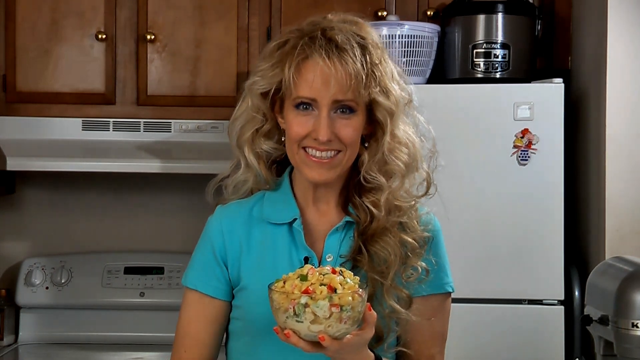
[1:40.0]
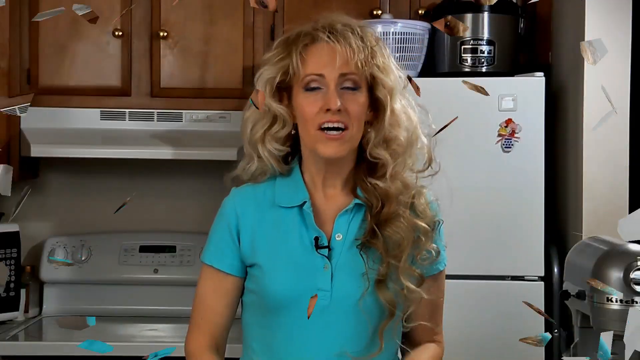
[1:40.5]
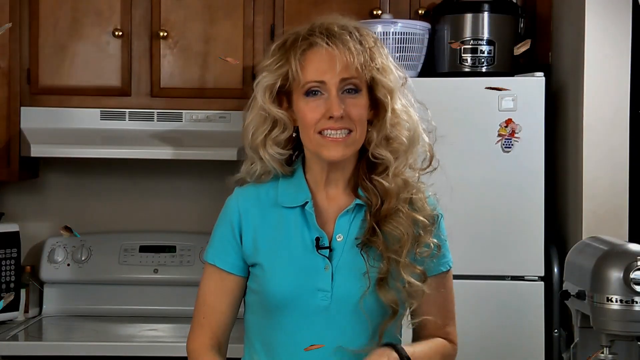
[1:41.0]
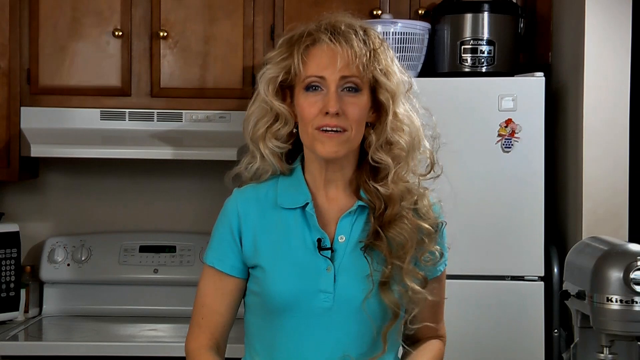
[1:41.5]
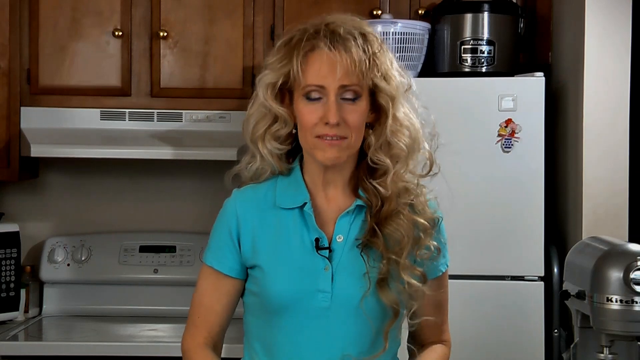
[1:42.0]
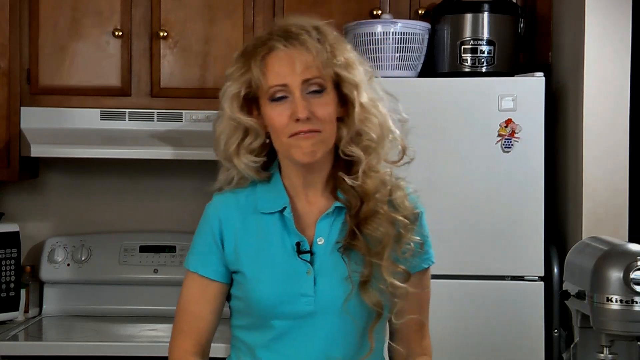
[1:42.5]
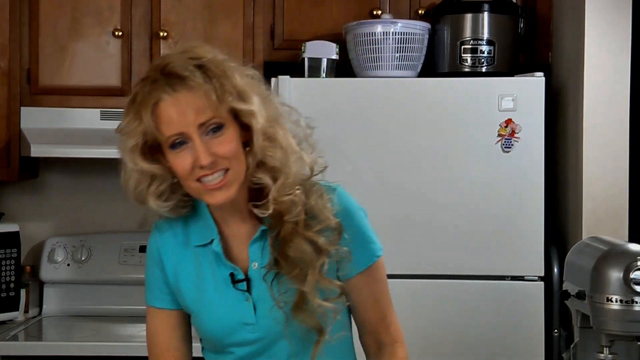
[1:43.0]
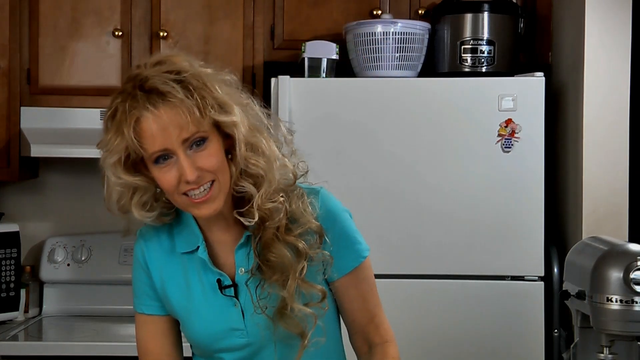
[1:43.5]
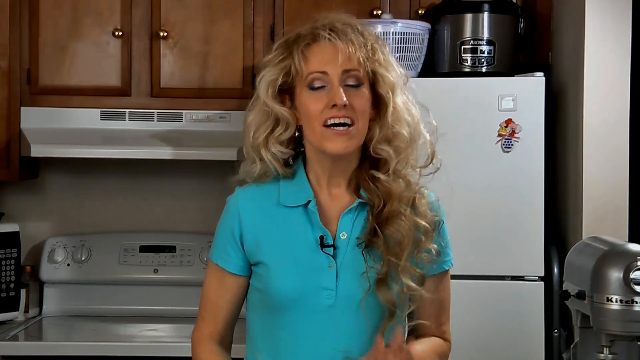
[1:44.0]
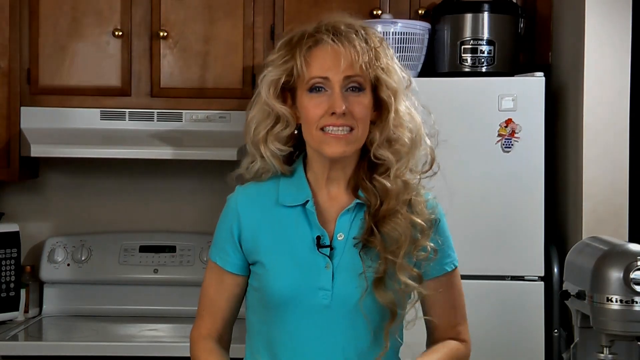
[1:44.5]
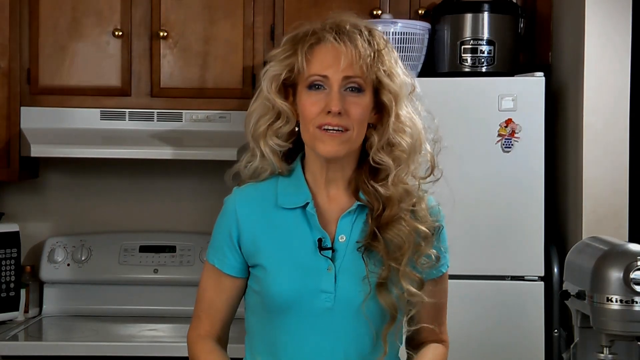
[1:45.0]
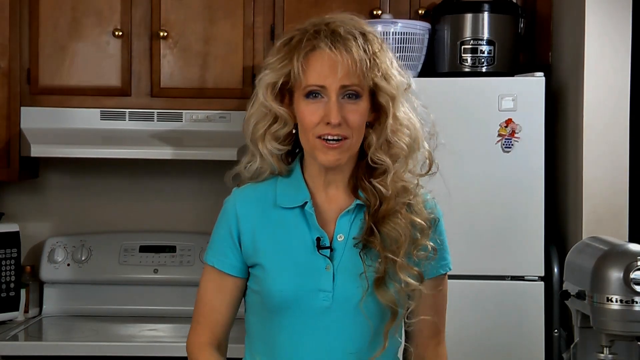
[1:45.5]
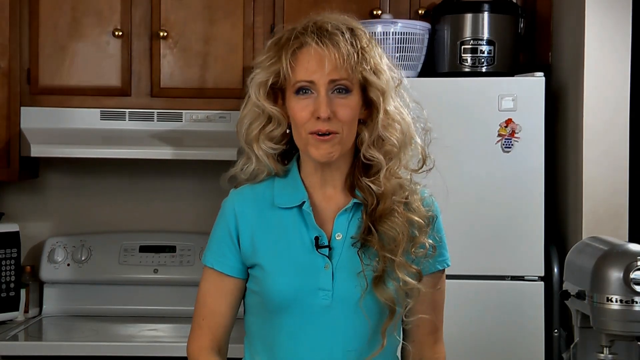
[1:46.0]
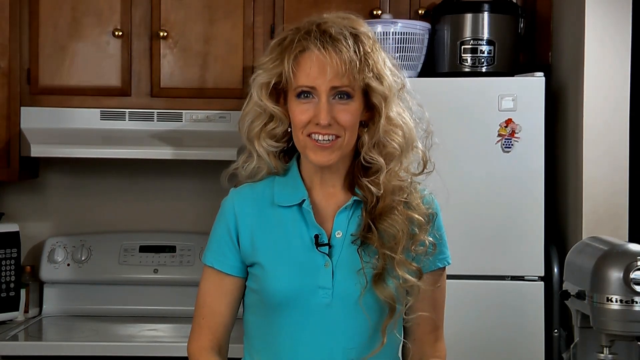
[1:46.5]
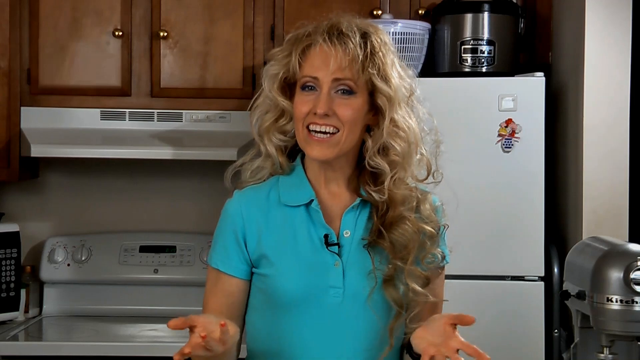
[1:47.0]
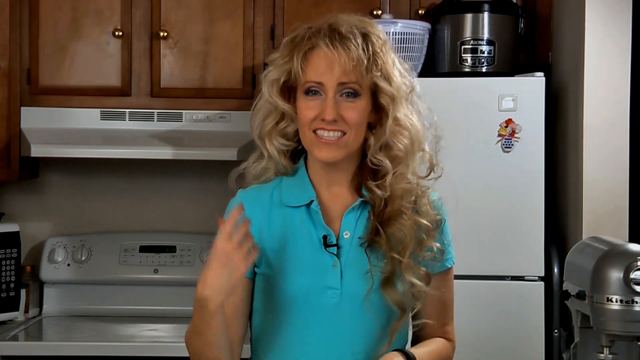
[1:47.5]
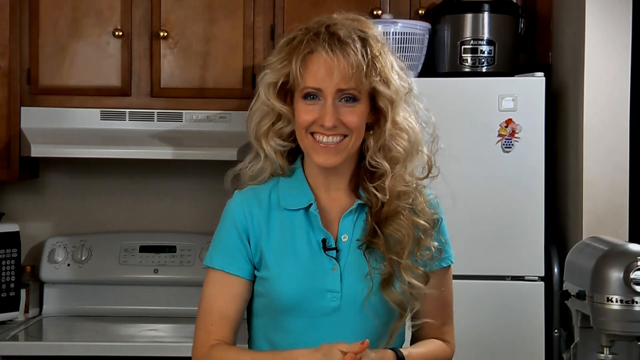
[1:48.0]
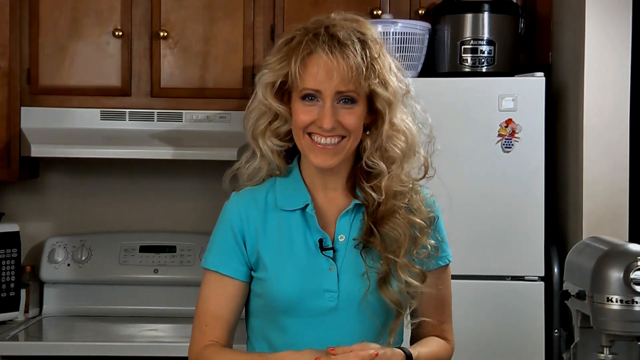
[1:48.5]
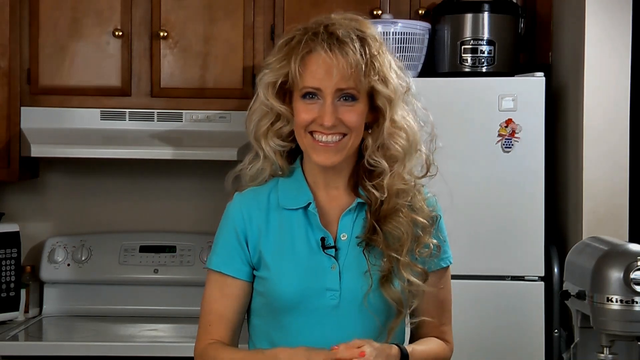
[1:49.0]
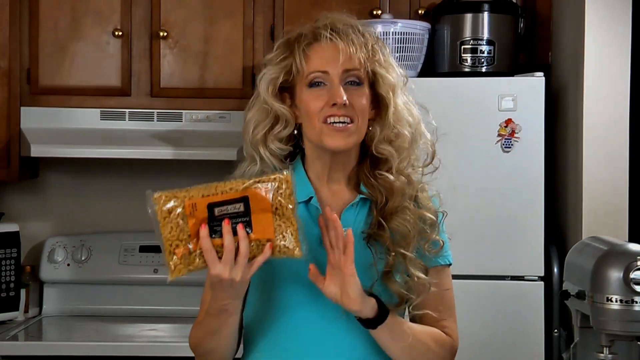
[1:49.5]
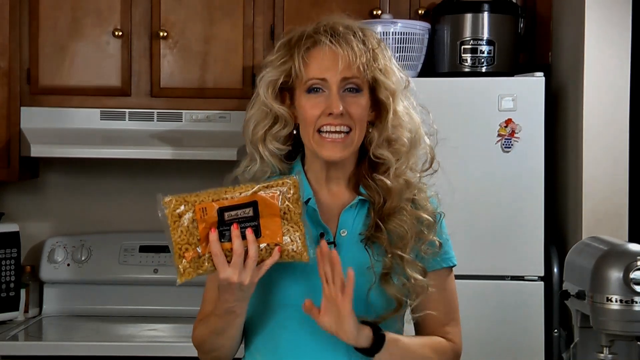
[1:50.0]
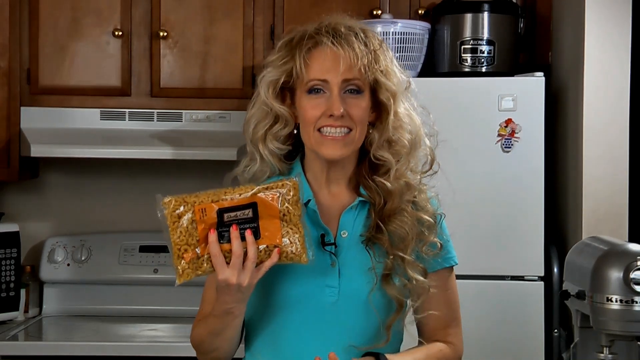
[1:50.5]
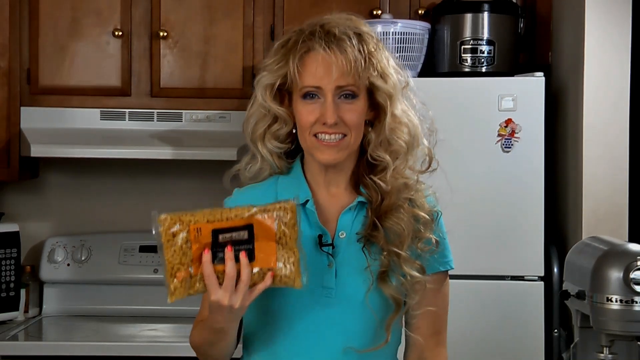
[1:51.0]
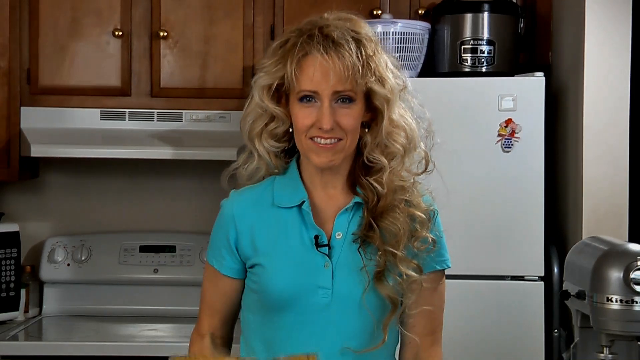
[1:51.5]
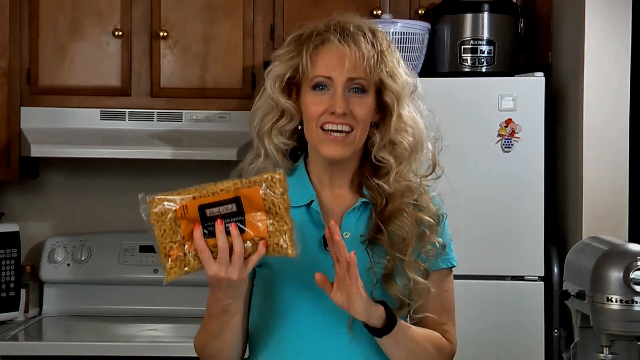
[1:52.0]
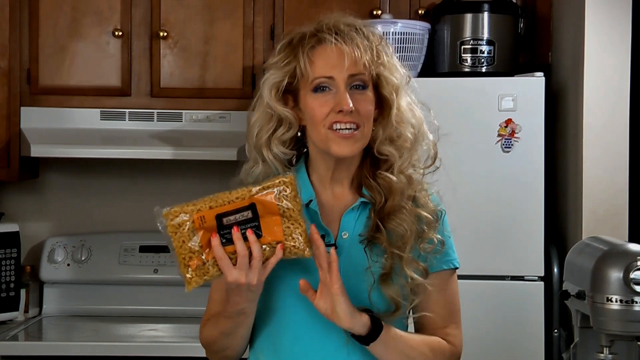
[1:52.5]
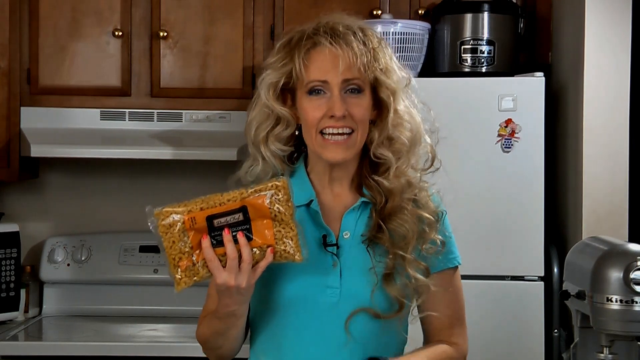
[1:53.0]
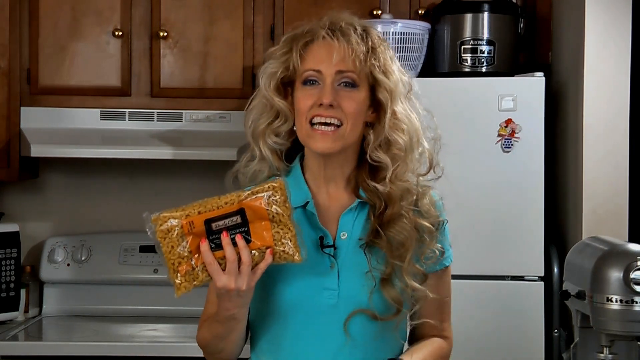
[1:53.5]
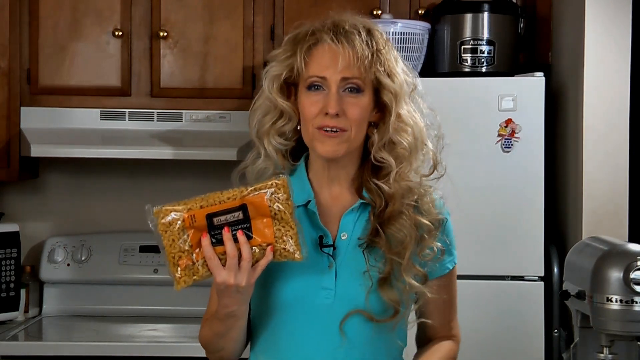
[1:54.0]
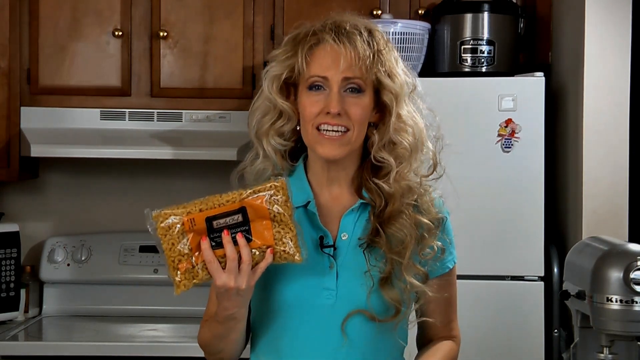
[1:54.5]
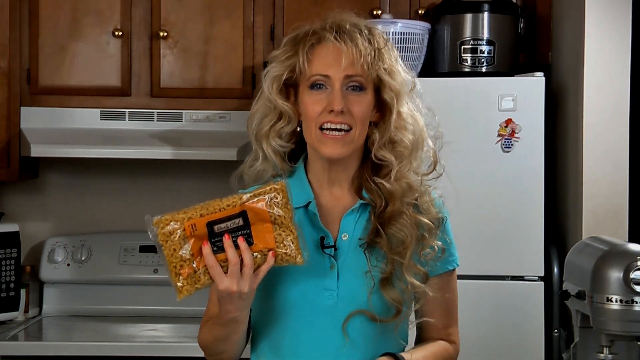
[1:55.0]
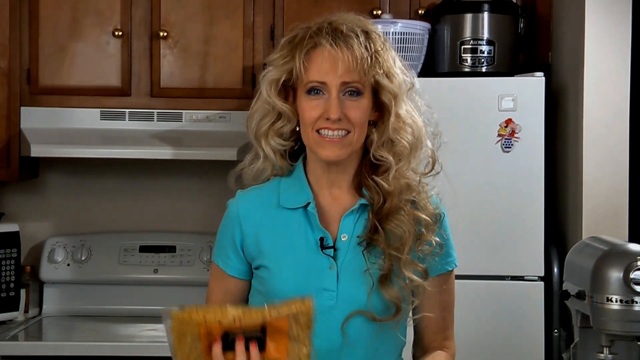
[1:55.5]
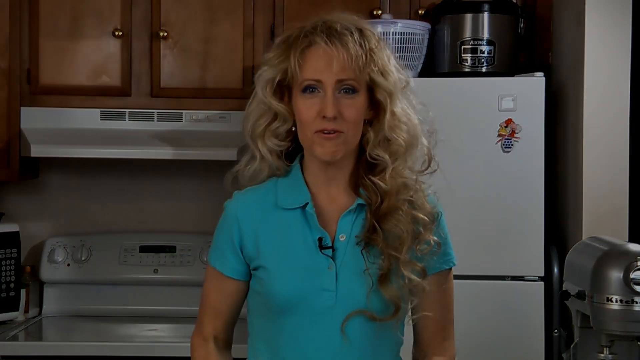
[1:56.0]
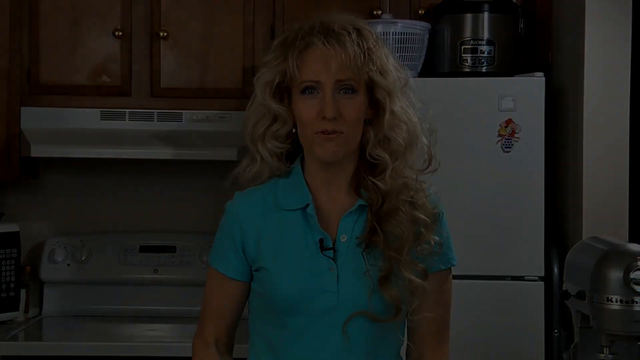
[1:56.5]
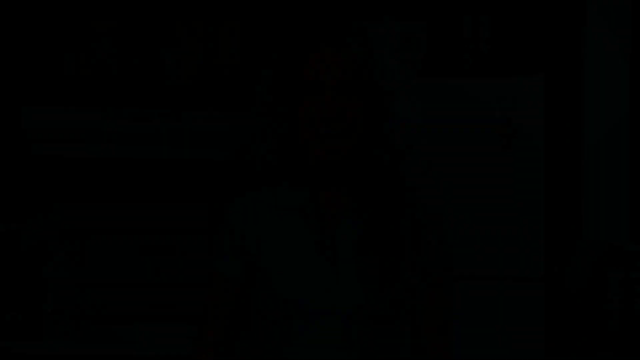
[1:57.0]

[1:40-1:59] The woman is shown holding the bowl of food she has made, looking even happier now that it is finished. She smiles at the camera and seems to be imagining the taste of her food. She then picks up the packet of macaroni and shows it to the camera.